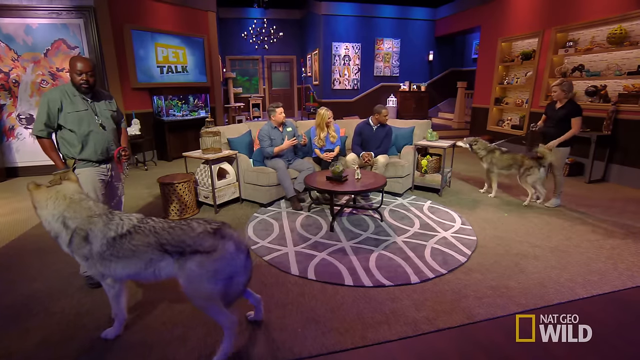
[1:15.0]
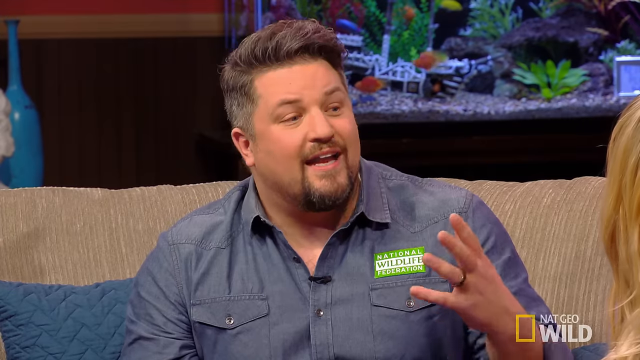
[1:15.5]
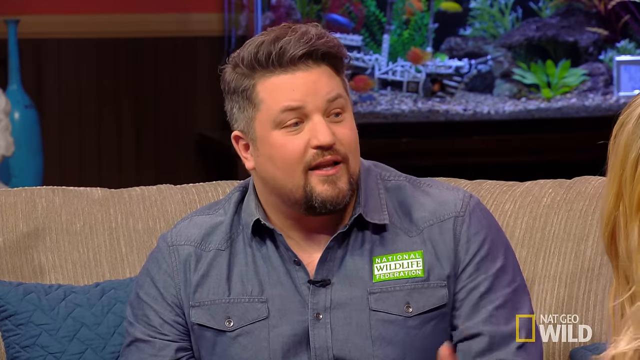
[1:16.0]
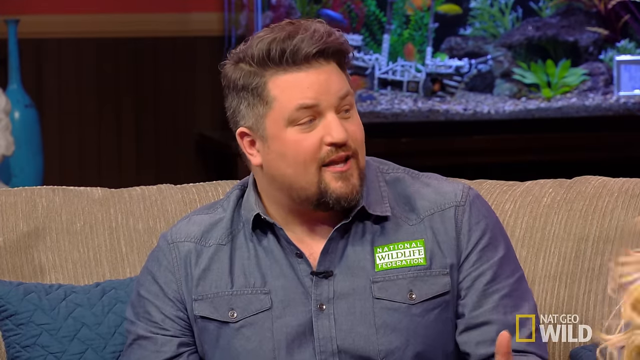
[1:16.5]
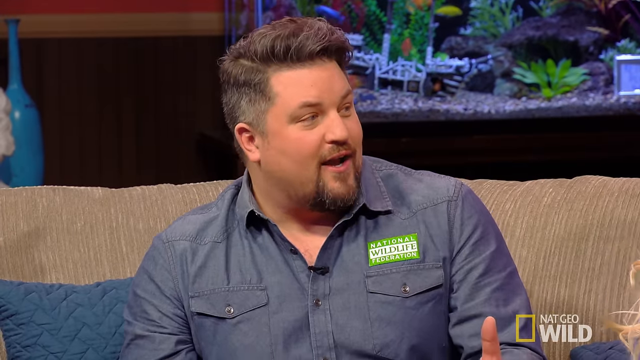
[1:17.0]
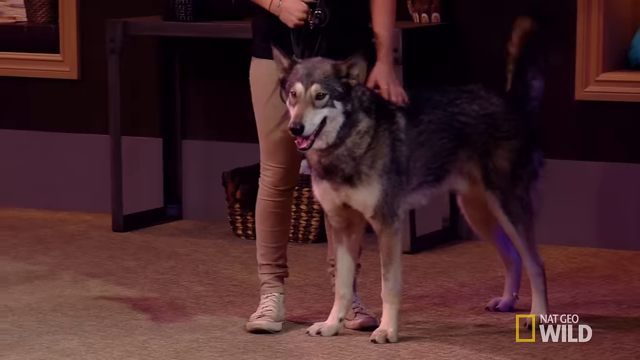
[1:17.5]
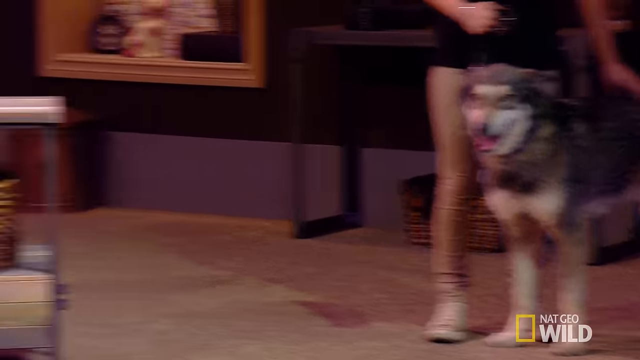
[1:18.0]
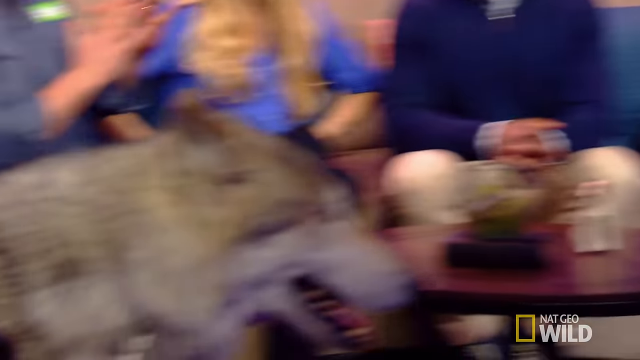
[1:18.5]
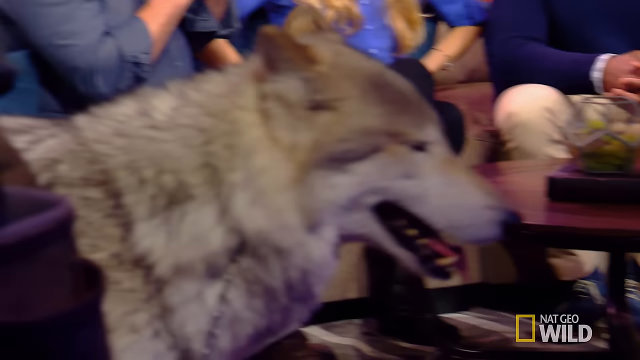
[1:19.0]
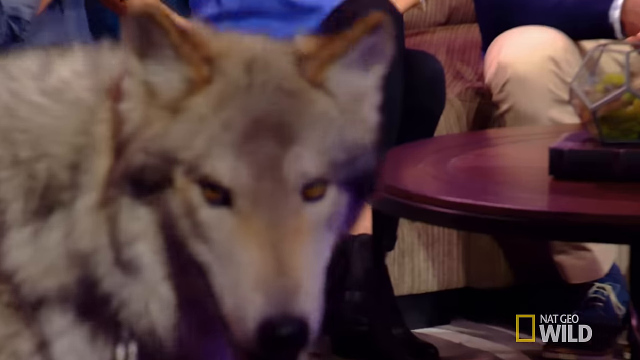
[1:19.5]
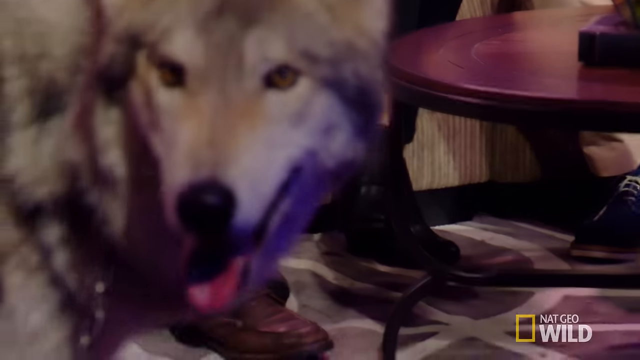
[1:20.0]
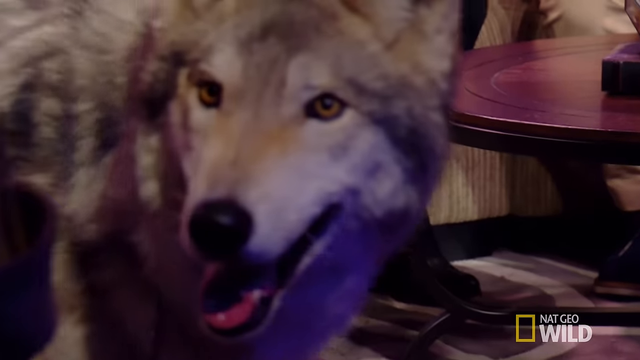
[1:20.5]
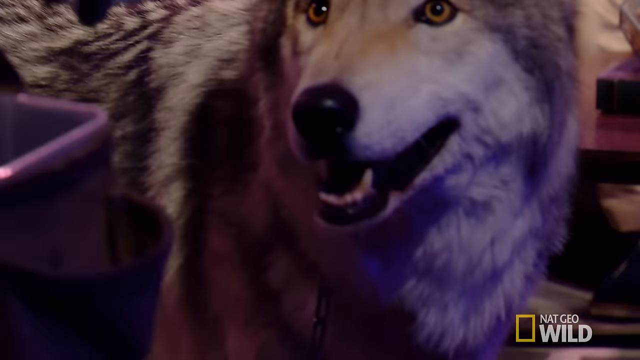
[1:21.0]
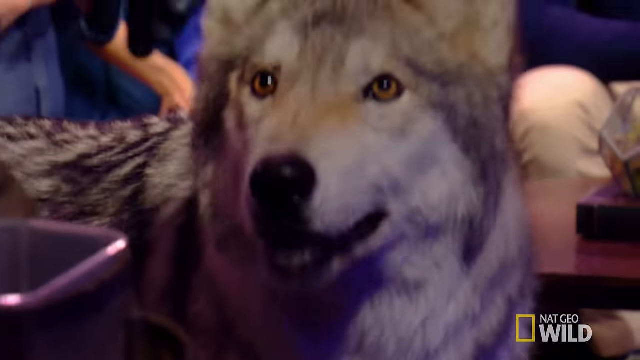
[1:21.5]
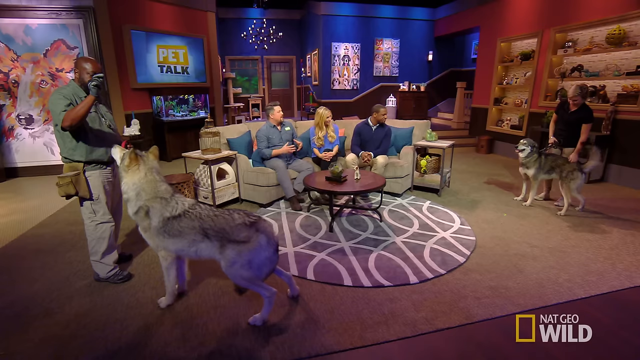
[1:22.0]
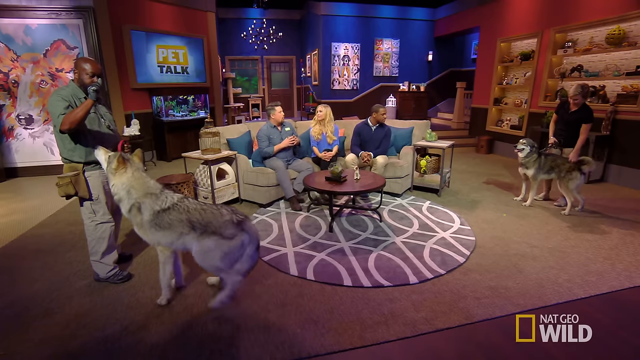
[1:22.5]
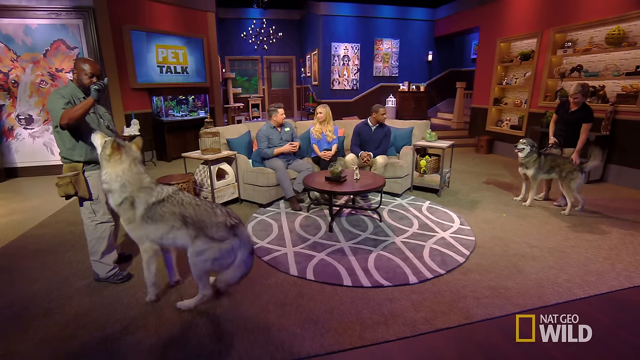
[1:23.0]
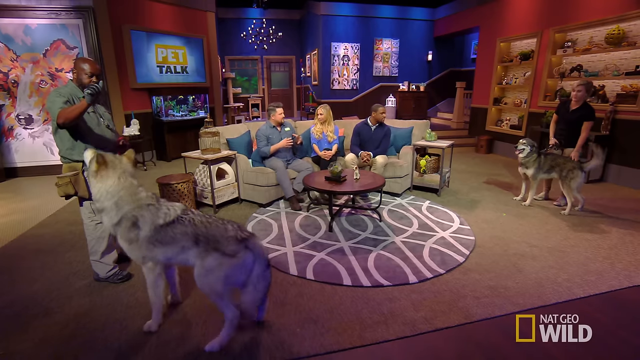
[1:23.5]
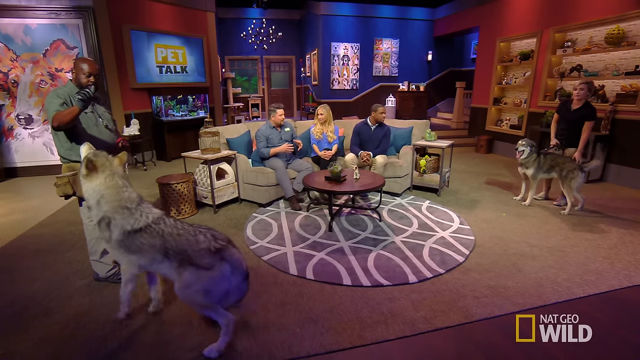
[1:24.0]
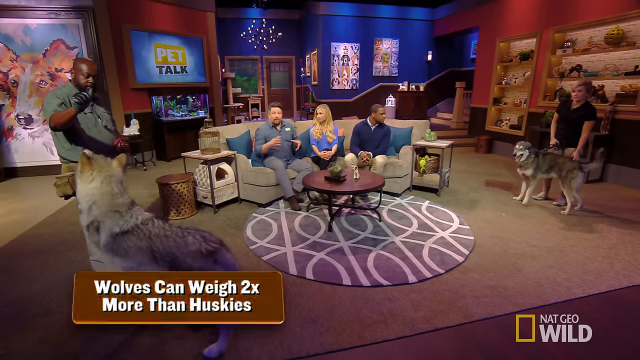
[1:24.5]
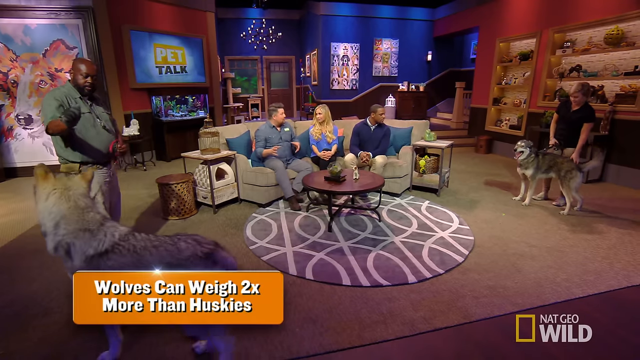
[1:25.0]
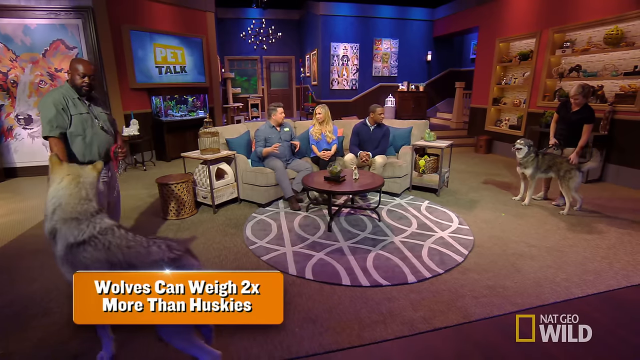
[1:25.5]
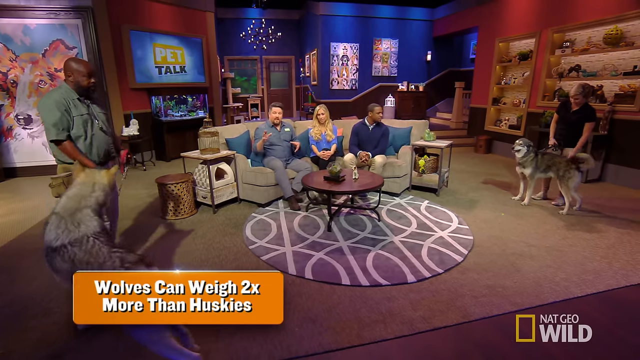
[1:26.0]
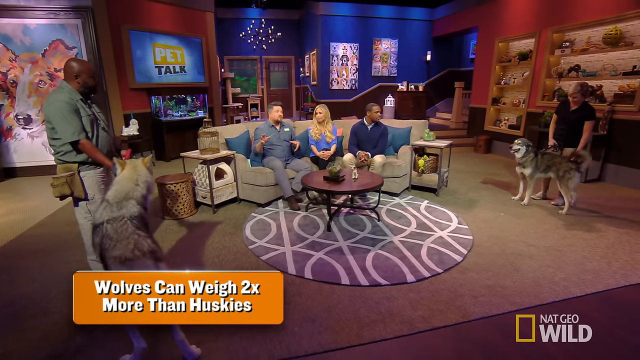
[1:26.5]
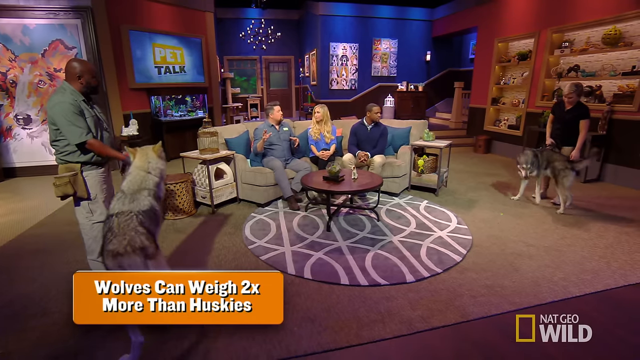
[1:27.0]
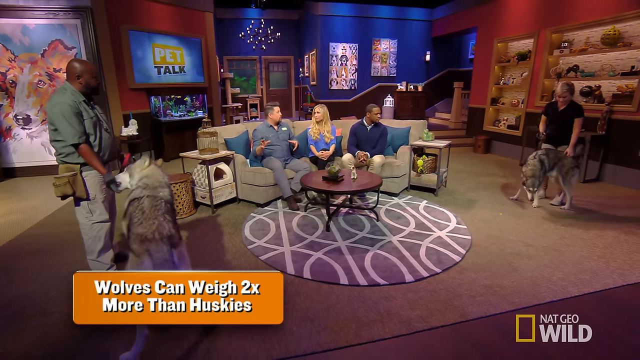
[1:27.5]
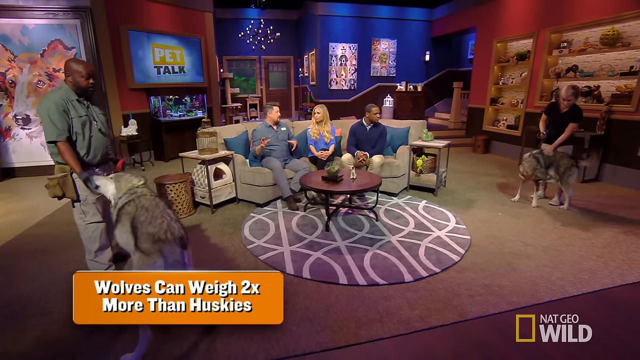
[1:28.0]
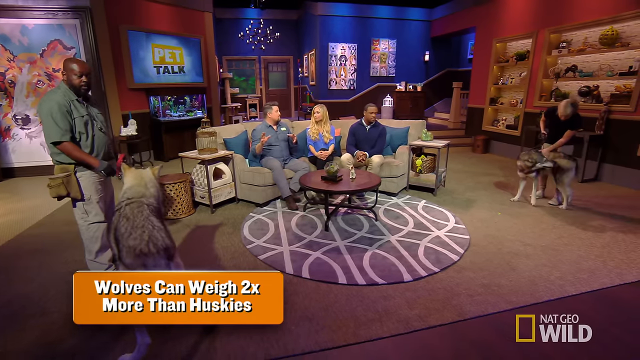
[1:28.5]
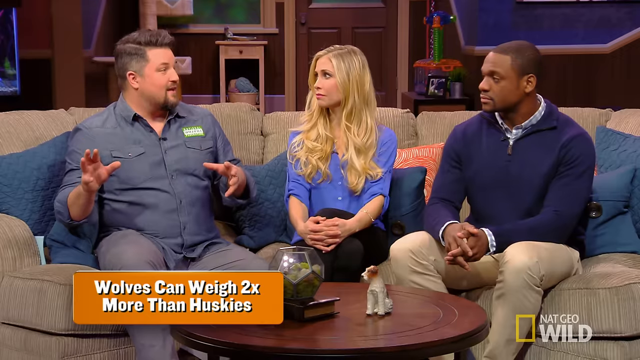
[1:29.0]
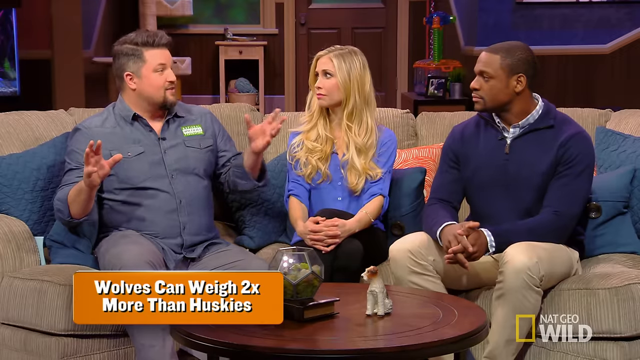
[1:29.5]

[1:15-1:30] A closer view shows the dogs and the room. A man is holding the first dog and seems to be doing some movements with it, while the other dog wiggles around. The man who has been talking from the start keeps talking and making movements with his hands, seemingly about the pets. The black man and the black woman seem to be paying close attention to what he says.